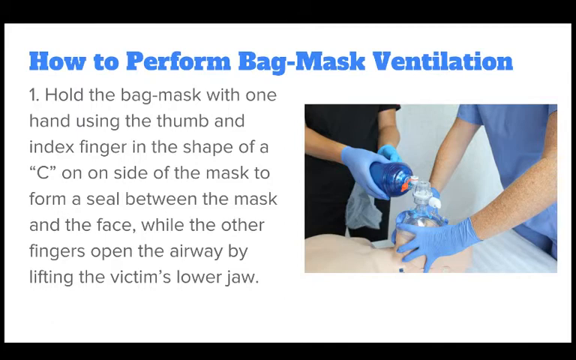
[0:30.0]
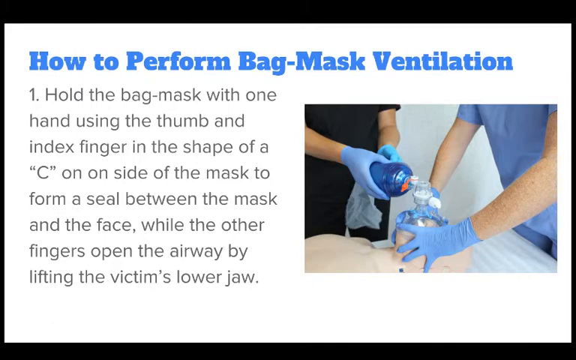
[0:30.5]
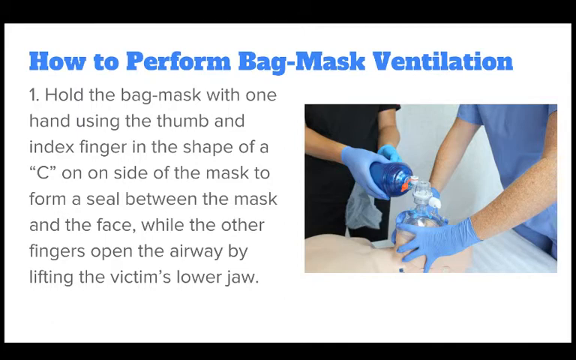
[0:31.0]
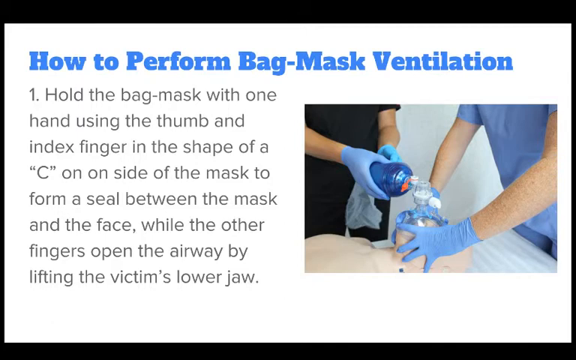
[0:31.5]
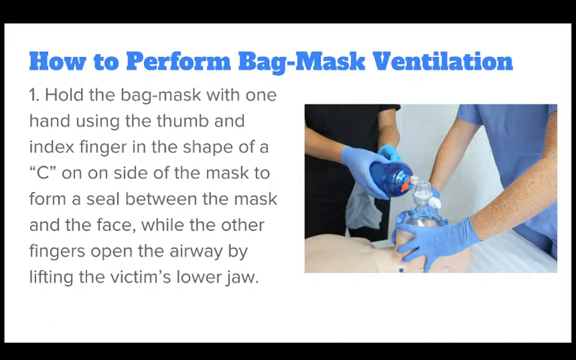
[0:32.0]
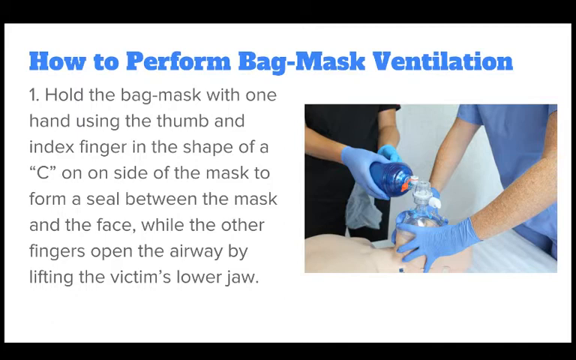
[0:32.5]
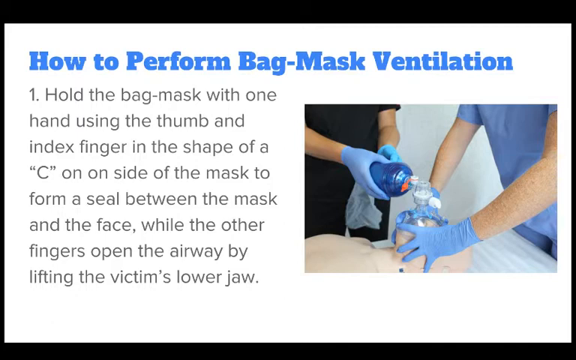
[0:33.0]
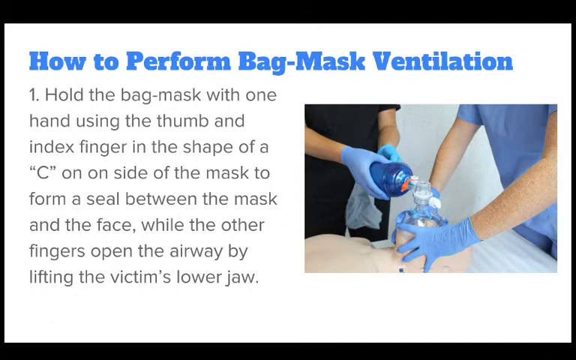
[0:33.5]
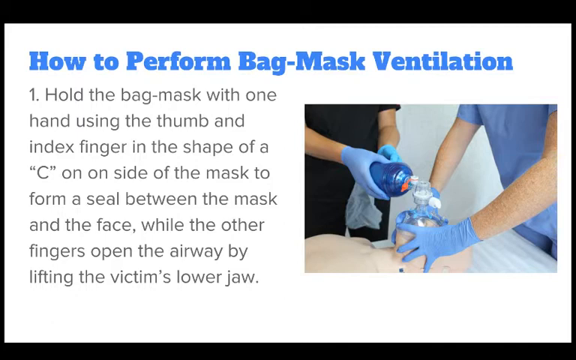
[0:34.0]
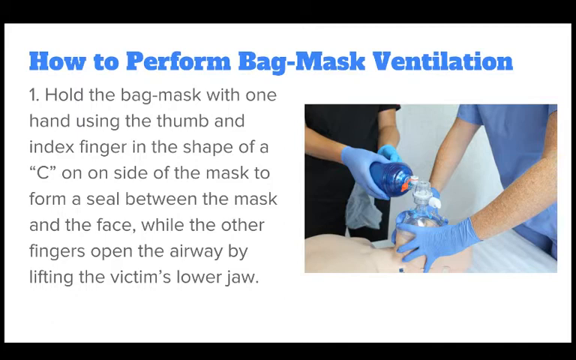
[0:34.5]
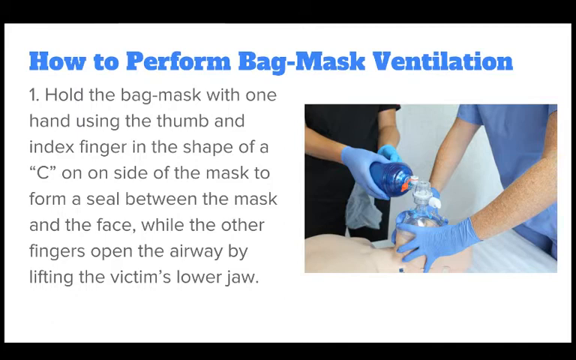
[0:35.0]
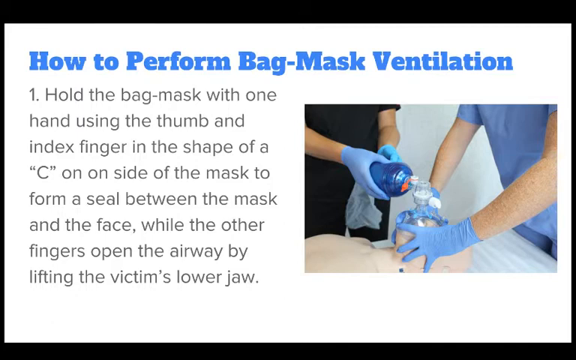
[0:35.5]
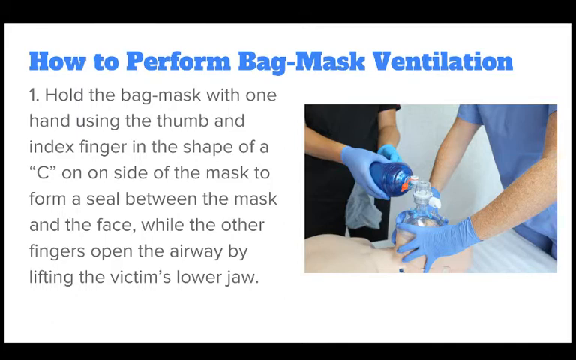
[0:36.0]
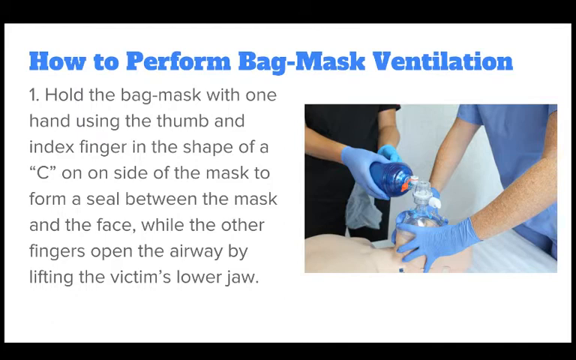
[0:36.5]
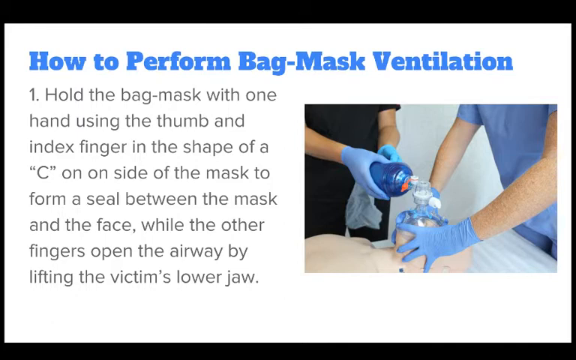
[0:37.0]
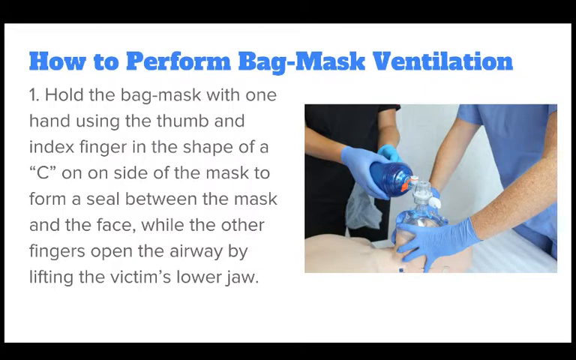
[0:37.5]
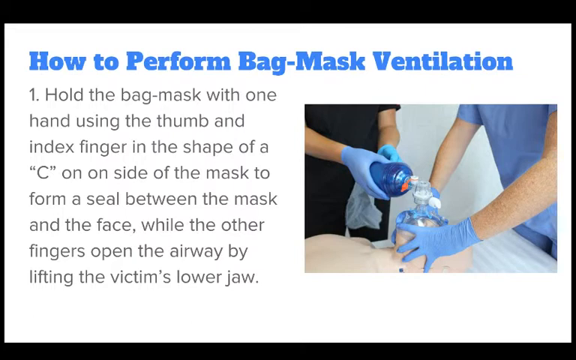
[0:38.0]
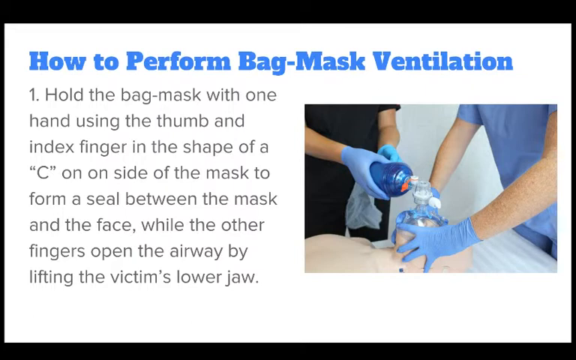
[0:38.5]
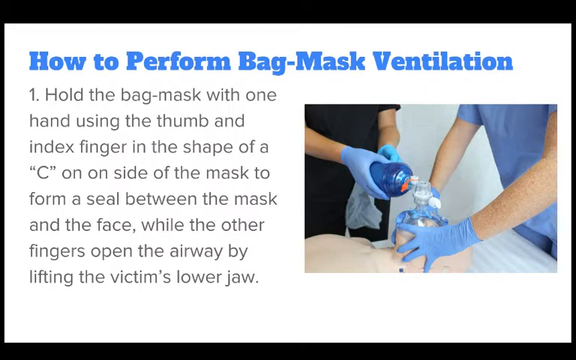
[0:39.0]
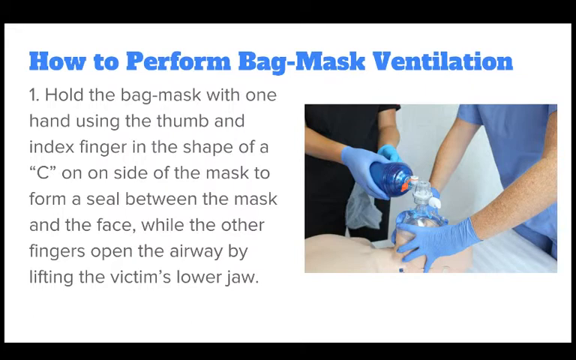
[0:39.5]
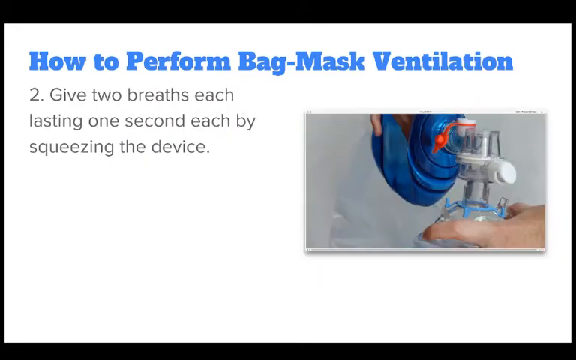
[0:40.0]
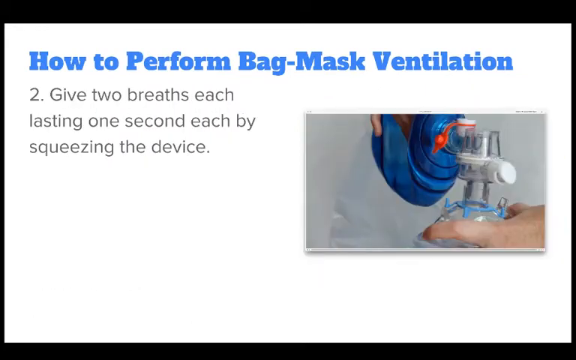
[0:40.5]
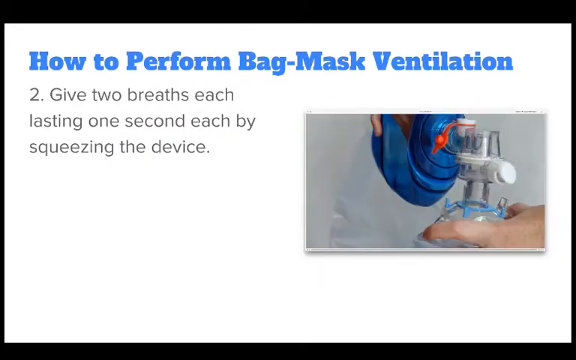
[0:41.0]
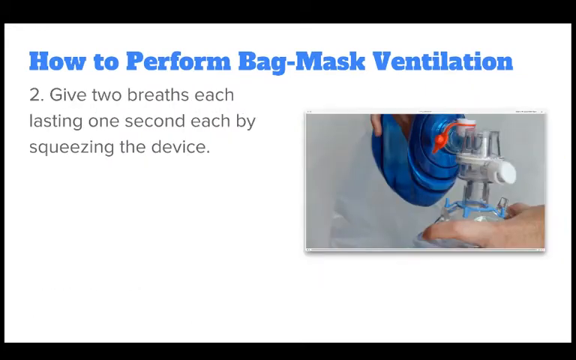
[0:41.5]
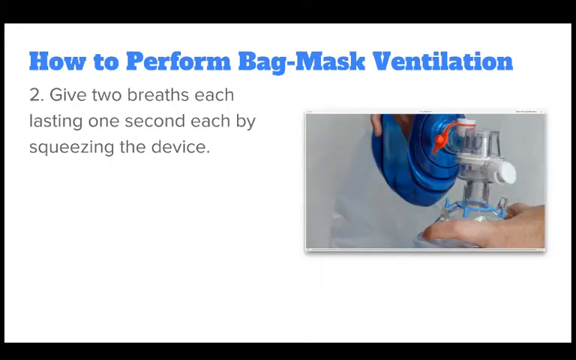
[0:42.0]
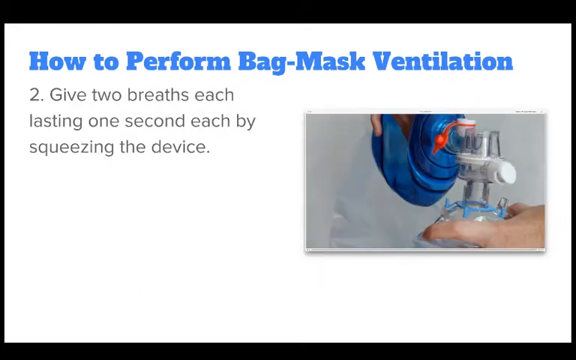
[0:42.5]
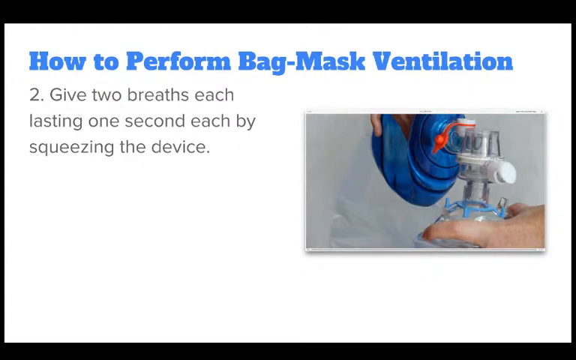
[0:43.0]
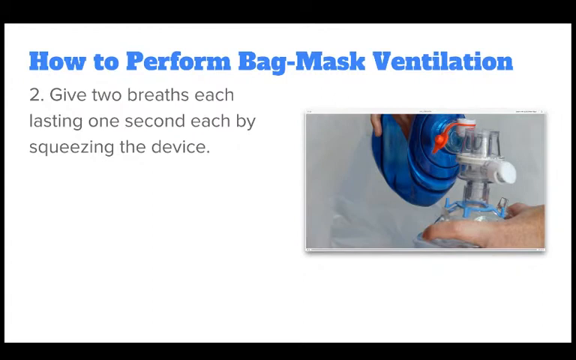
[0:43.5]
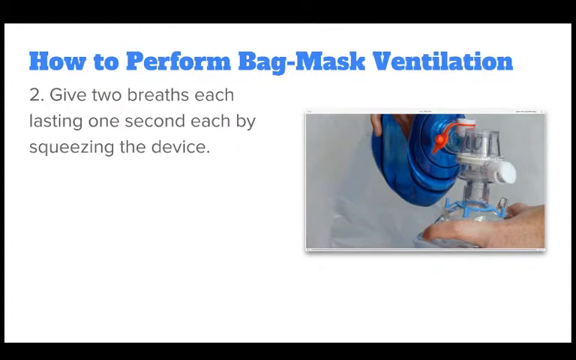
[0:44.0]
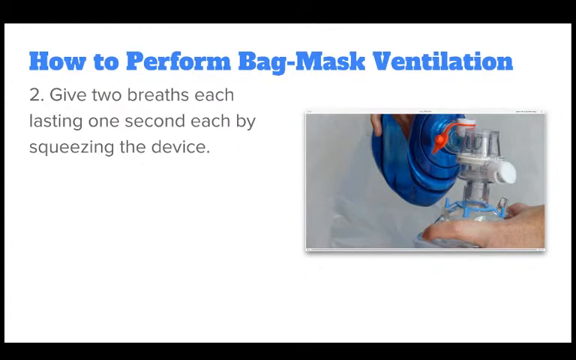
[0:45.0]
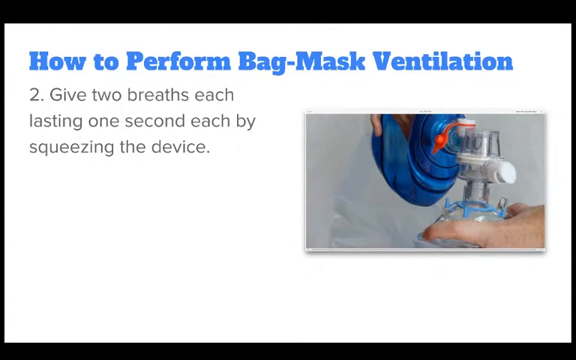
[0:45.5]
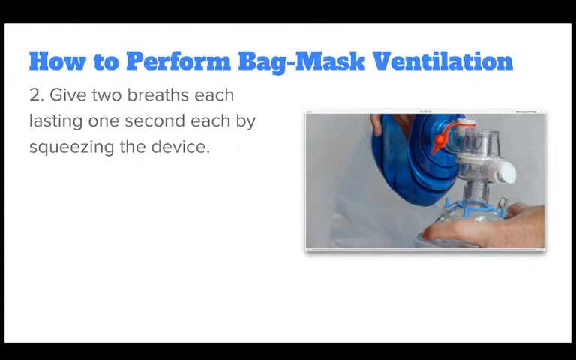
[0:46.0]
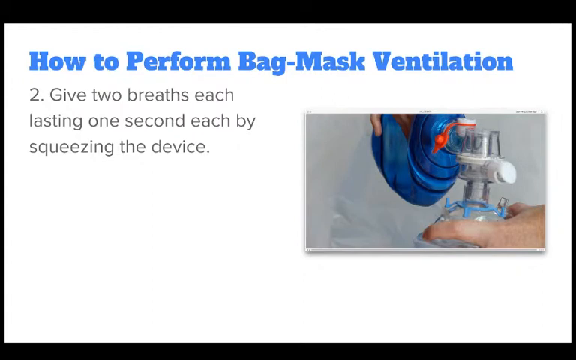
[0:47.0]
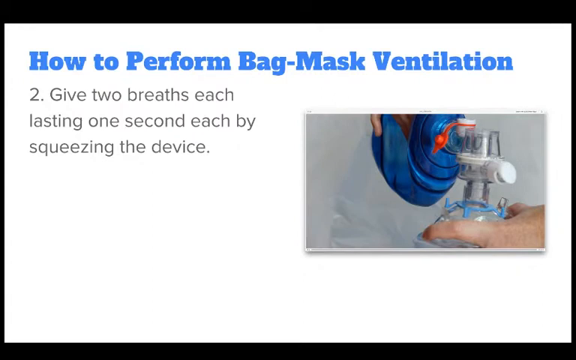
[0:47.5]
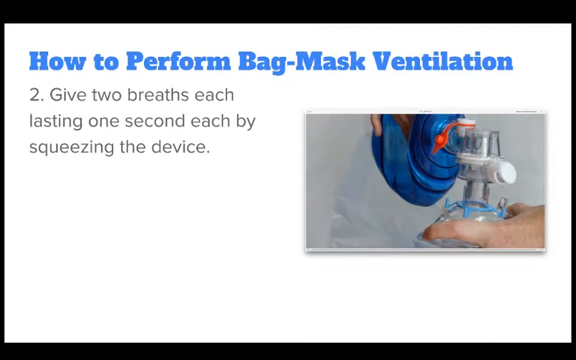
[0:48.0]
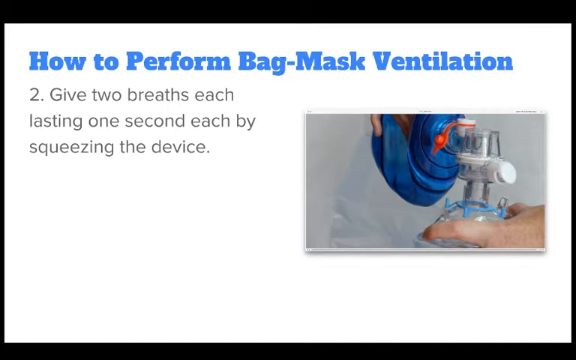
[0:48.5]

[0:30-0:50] The text on the screen ends with the words "victim's lower jaw." The video then moves to a new slide-like screen with the same headline. The picture on the right has changed: a rectangle more or less below the word "ventilation" shows a close-up of the bag mask. The blue bag is at the top center, with fingers squeezing it so that it is deflated in the center. The bag is shaped like a horizontal American football. Tubing sticks out of the front of it, forms an L shape, and goes down to a cup-like mask, which a hand holds down on the face of the dummy; the dummy itself cannot be seen because the shot is so close up. On the left, the text has changed to a number 2 followed by three lines reading "Give two breaths each lasting one second each by squeezing the device." There is a big white space below the text, which doesn't fill out the slide as much. The slide is held for a while.